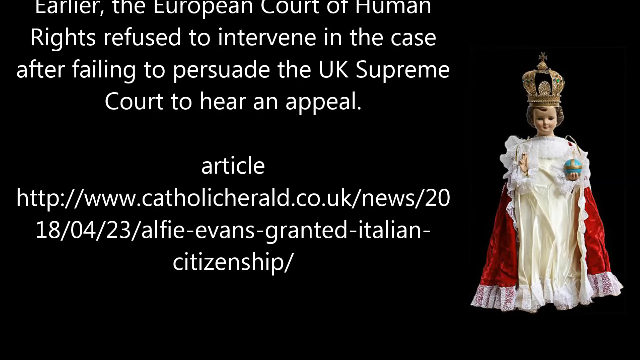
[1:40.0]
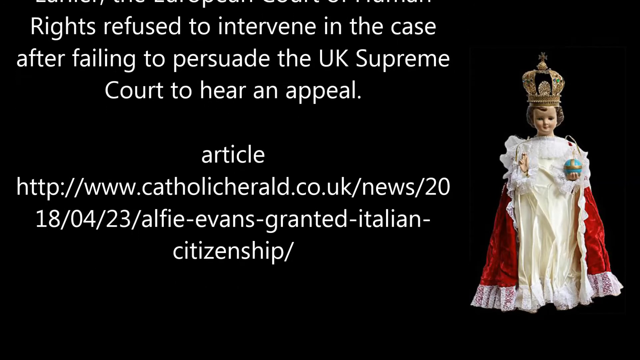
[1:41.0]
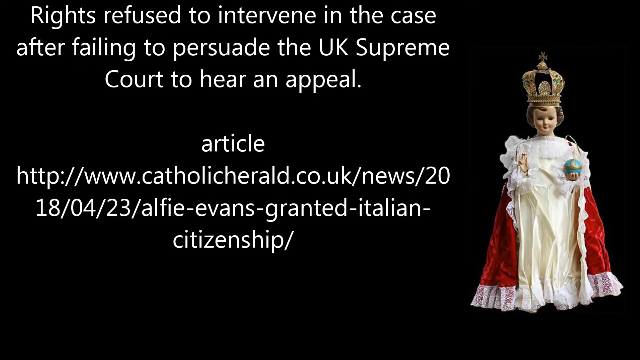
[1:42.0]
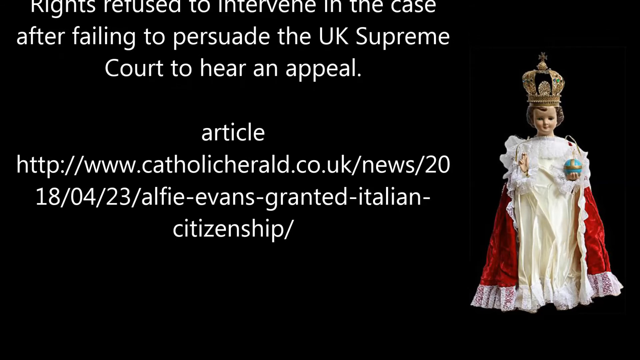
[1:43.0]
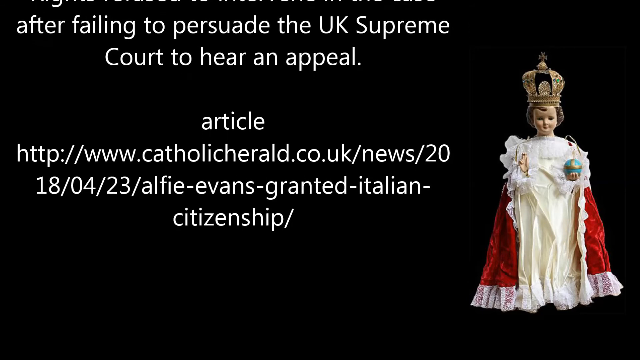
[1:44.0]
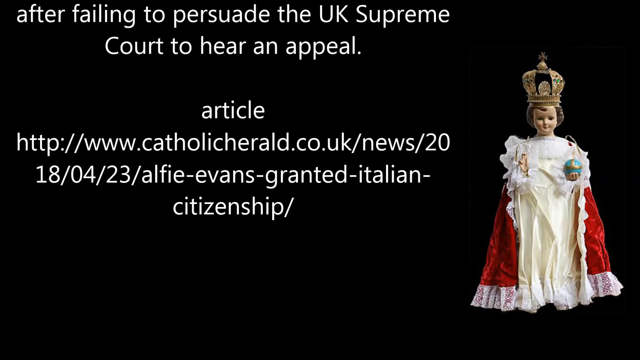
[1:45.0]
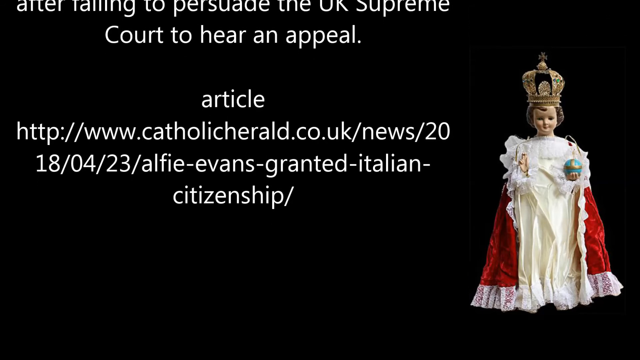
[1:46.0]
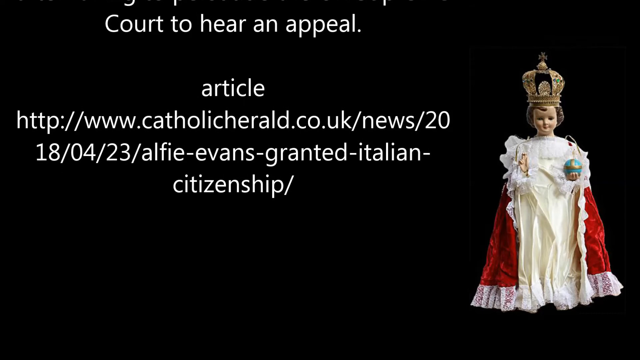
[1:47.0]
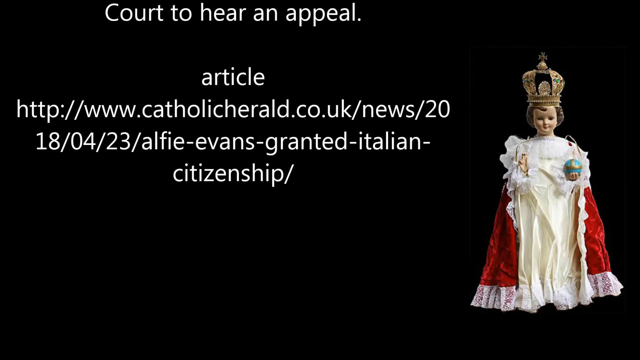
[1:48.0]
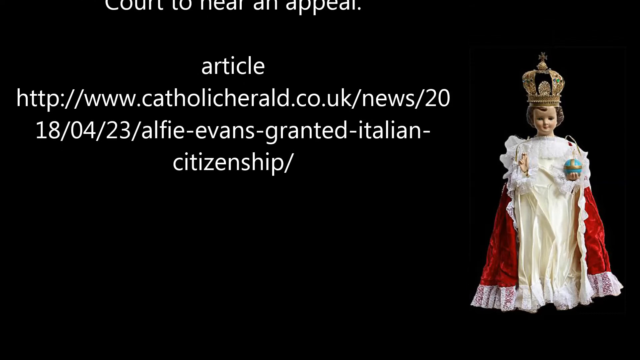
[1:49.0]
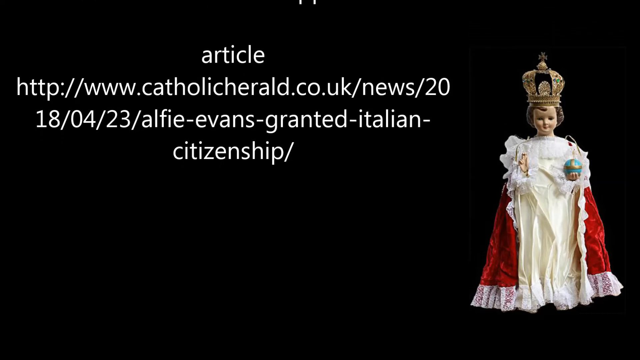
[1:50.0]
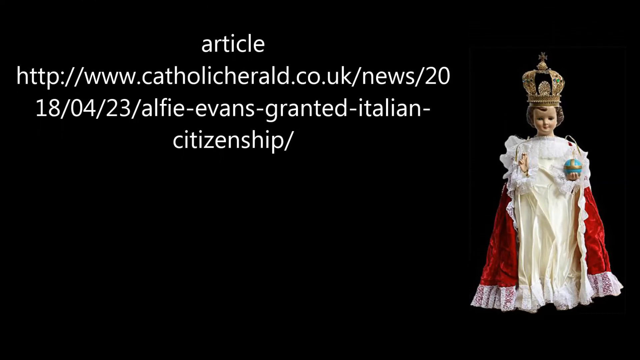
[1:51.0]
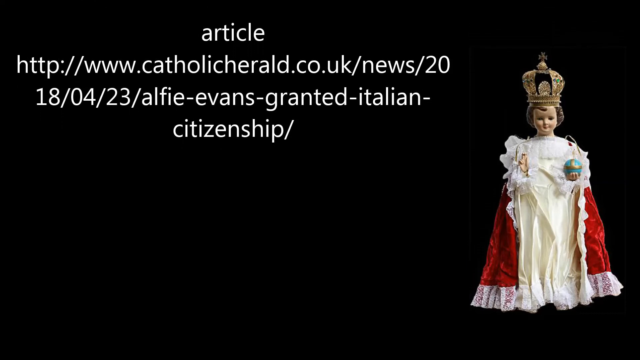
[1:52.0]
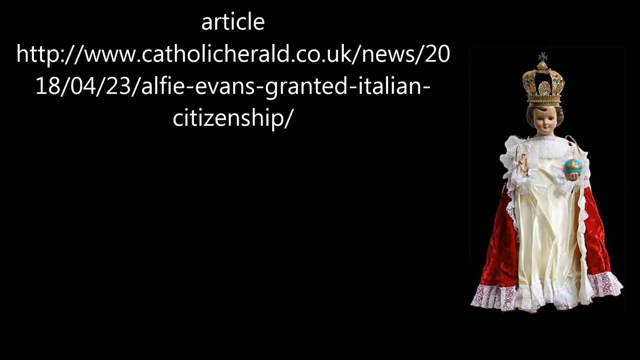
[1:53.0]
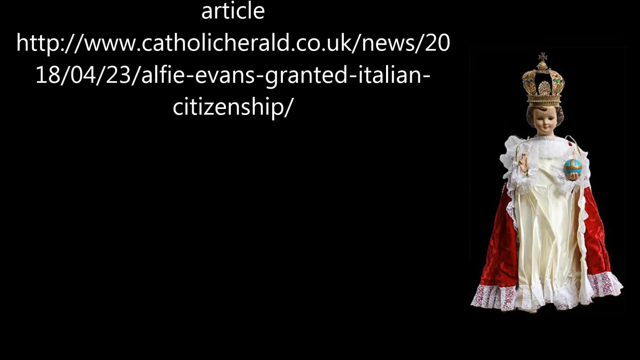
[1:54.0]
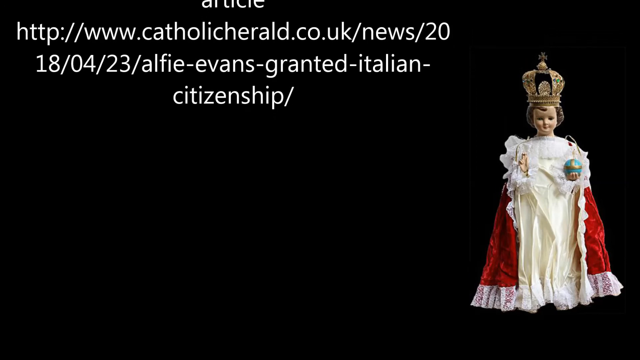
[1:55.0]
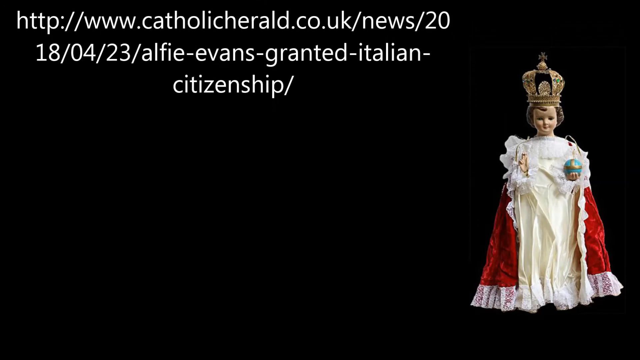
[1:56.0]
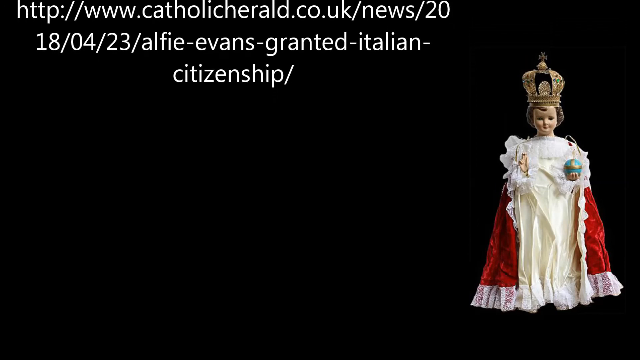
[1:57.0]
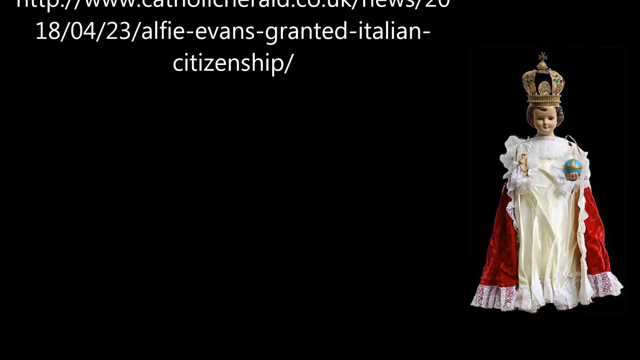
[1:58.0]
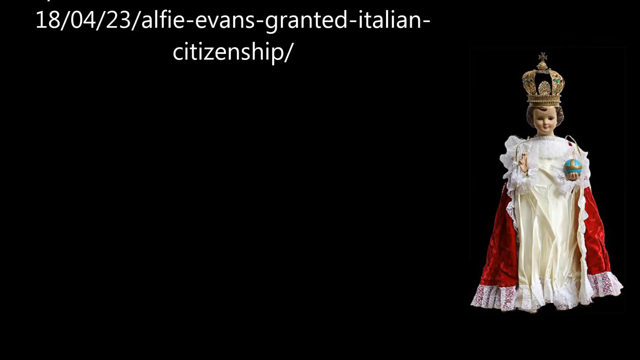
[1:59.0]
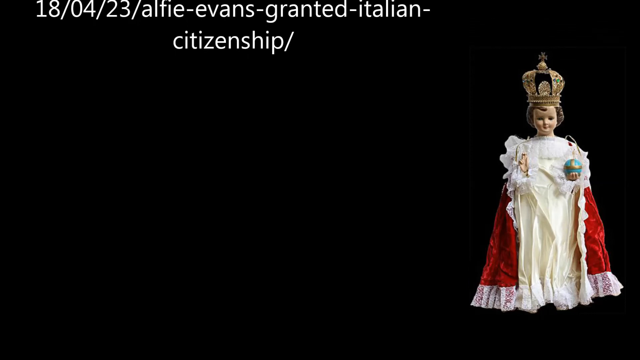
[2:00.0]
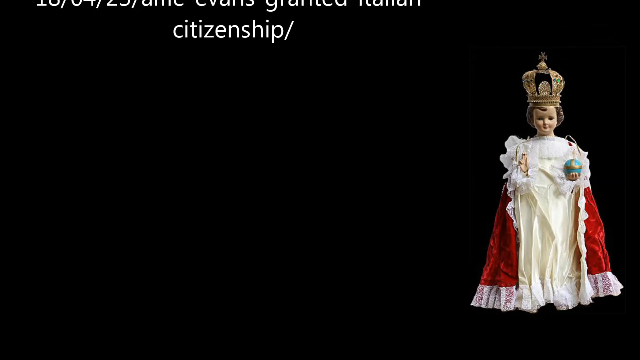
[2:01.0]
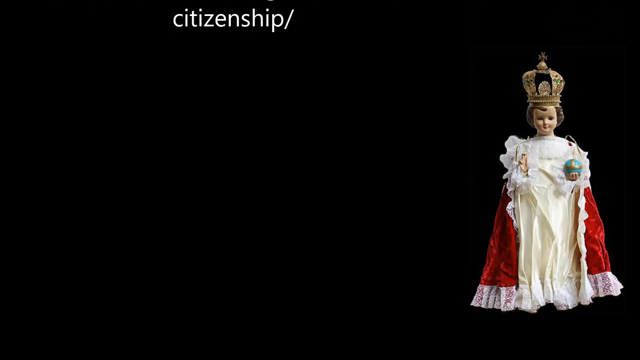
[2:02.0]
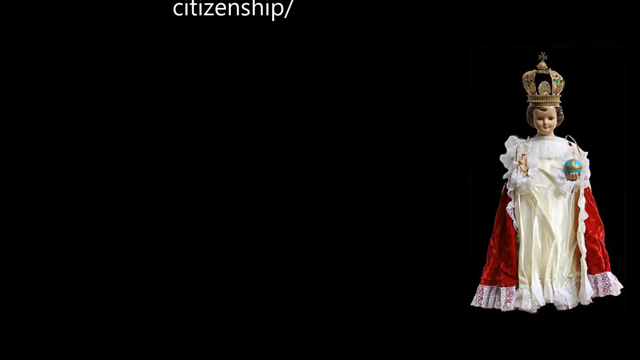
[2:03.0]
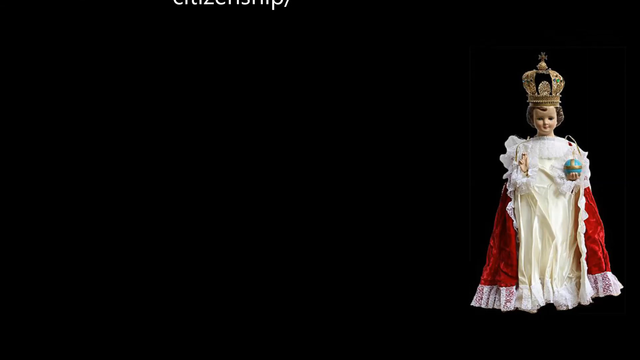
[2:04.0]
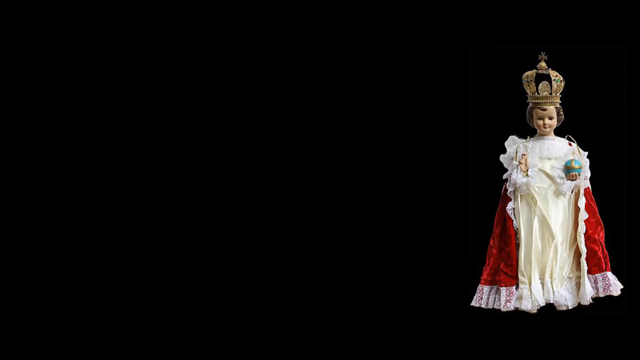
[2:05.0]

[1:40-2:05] White text scrolls very slowly upward toward the top of a dark black screen, with a doll in a king's robe or queen's dress to the right of the text. The king doll is carrying what appears to be a globe or some sort of ornament in its left hand. It wears a crown with a cross at the top, apparently bejeweled with many different diamonds or gems. The doll has a blank, dead stare and wears a white dress with a red robe around it. The scrolling white text reaches the top of the screen, and the scene ends.